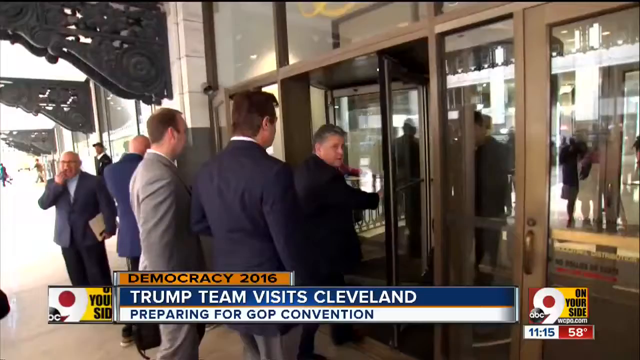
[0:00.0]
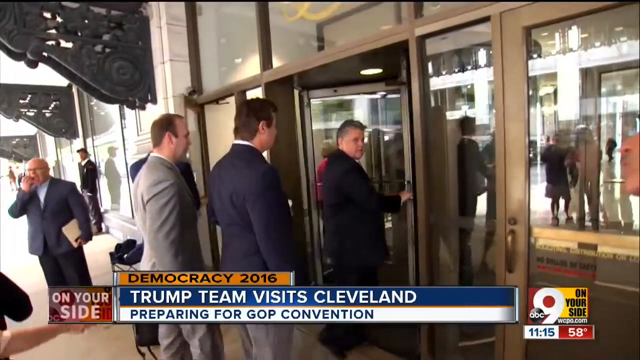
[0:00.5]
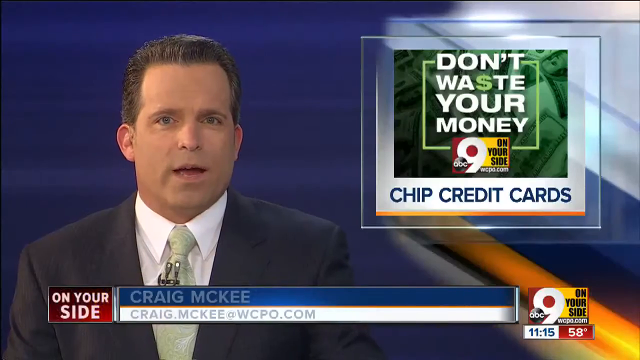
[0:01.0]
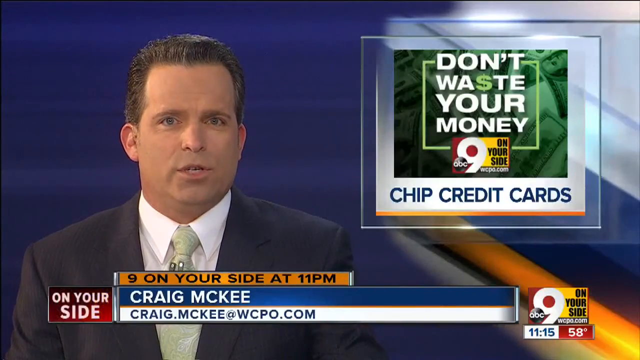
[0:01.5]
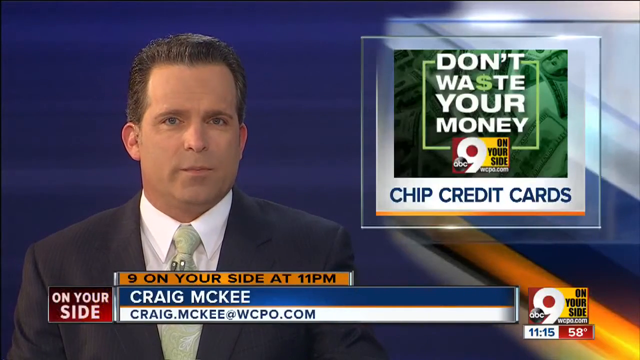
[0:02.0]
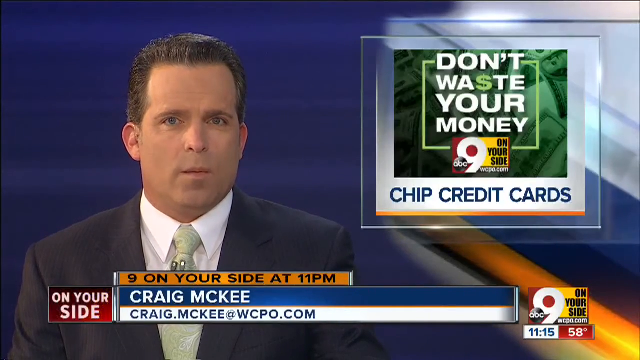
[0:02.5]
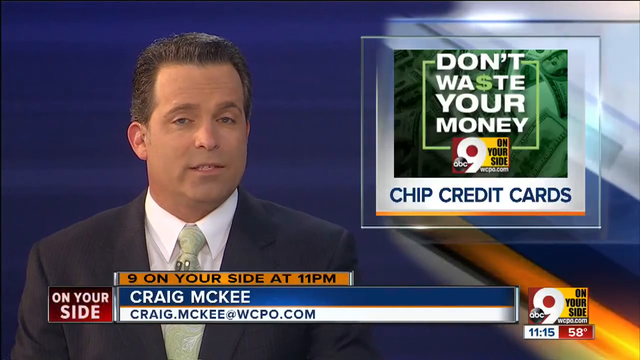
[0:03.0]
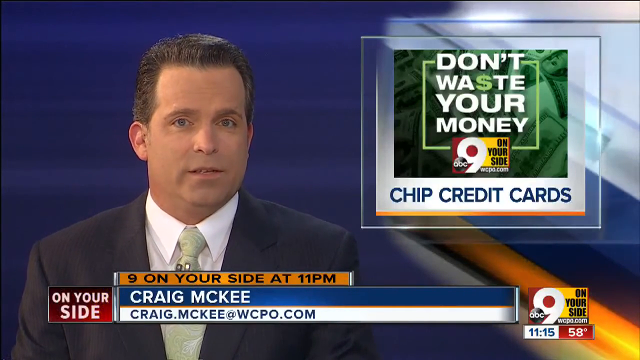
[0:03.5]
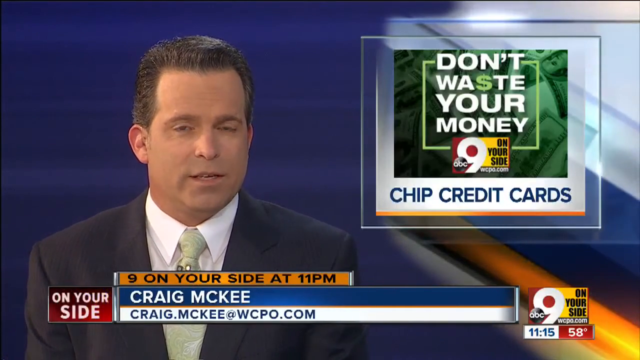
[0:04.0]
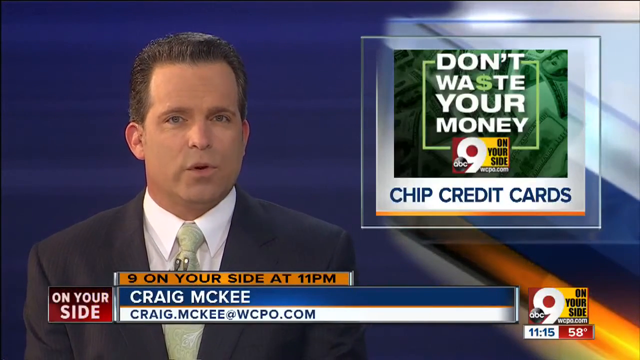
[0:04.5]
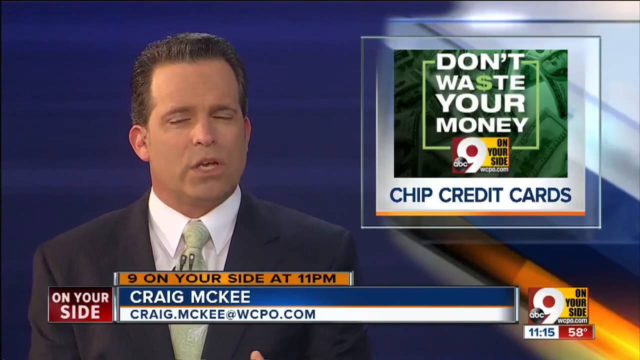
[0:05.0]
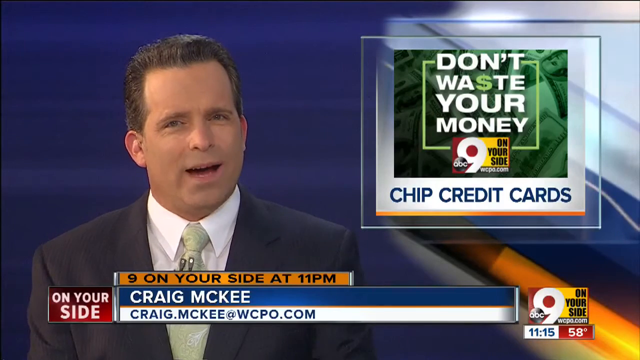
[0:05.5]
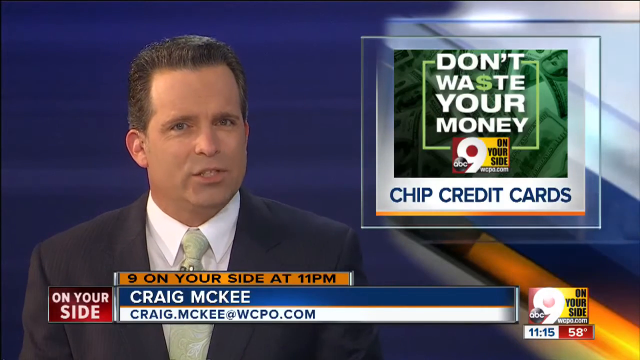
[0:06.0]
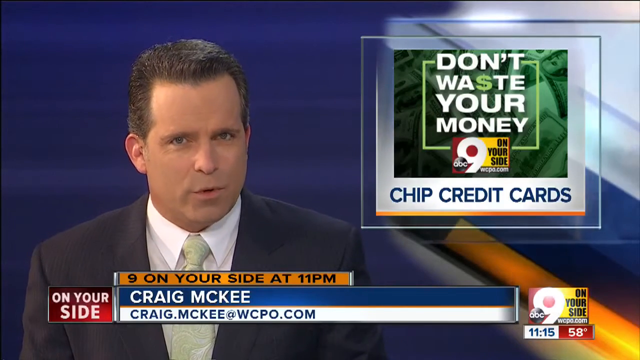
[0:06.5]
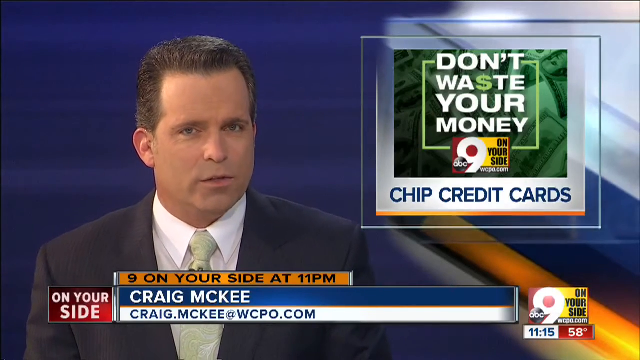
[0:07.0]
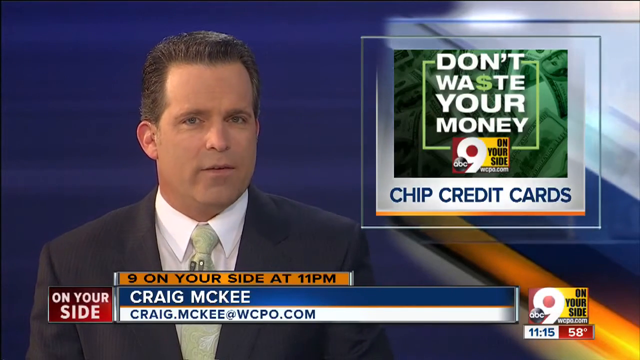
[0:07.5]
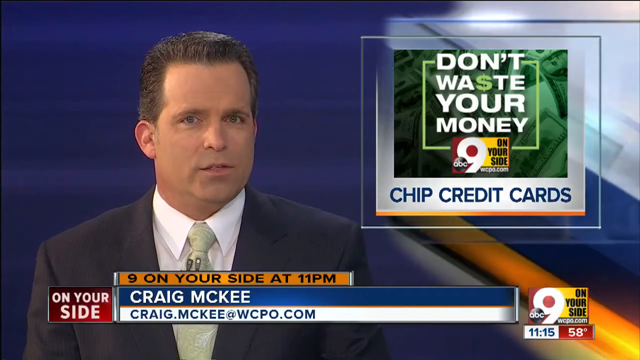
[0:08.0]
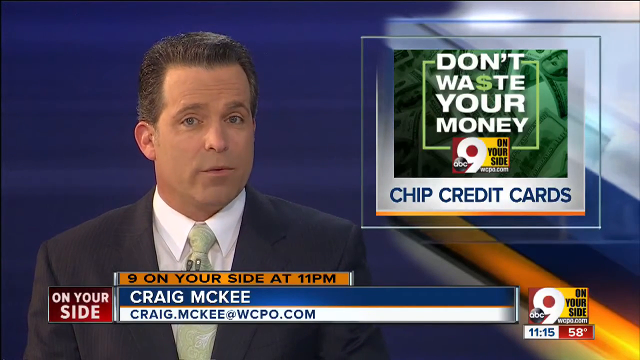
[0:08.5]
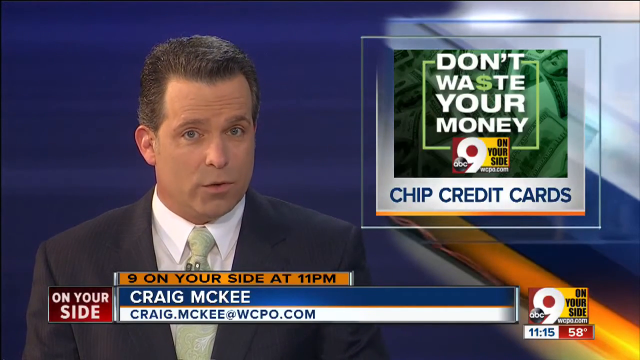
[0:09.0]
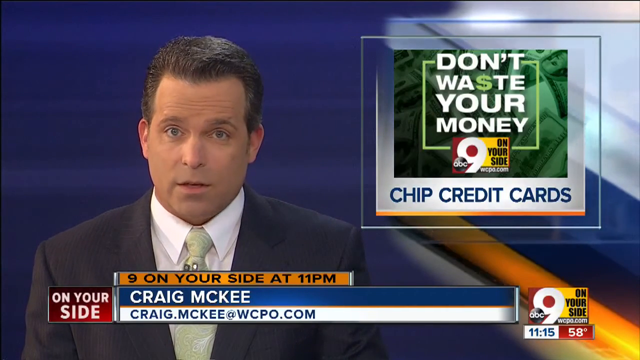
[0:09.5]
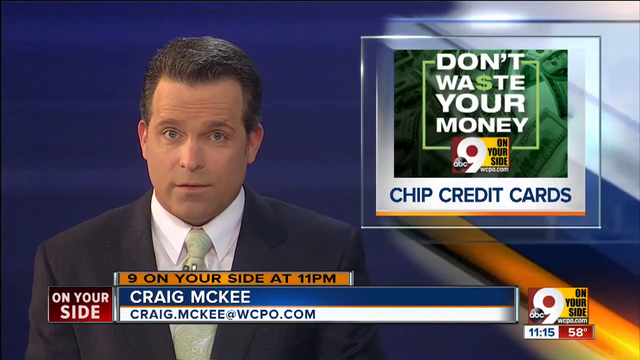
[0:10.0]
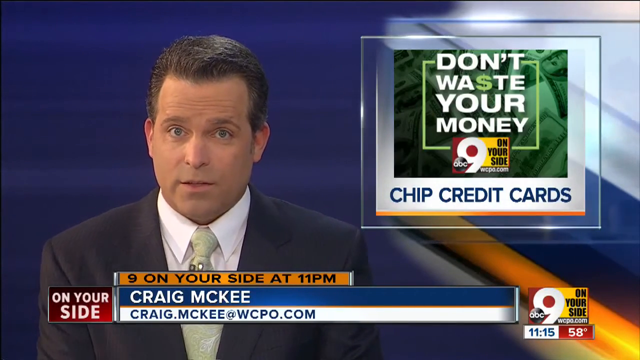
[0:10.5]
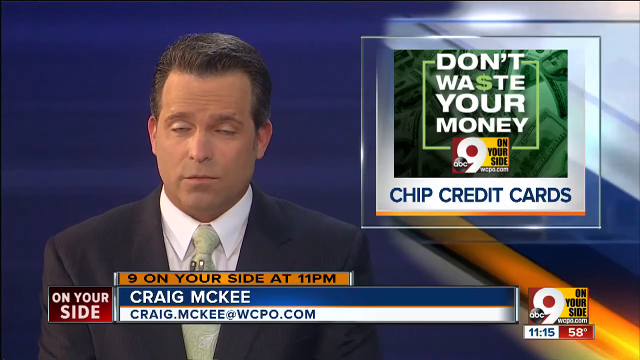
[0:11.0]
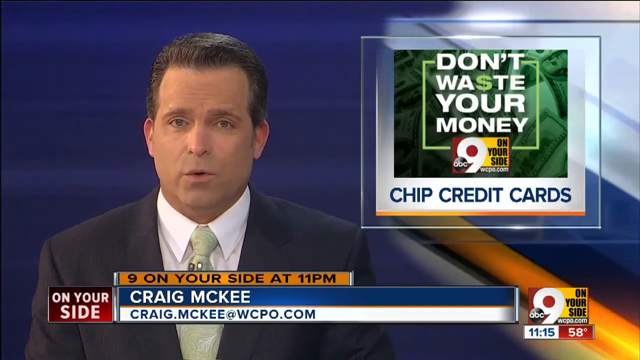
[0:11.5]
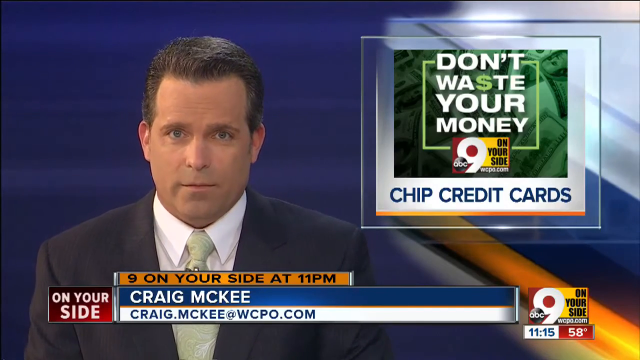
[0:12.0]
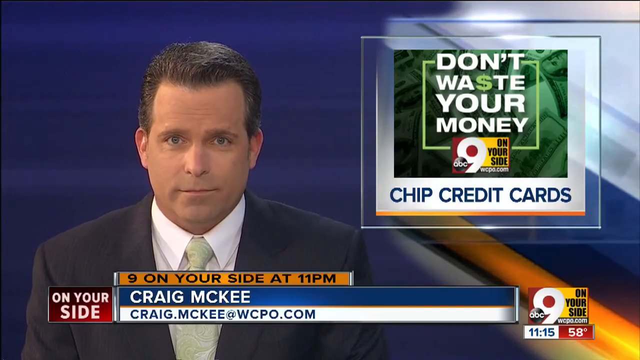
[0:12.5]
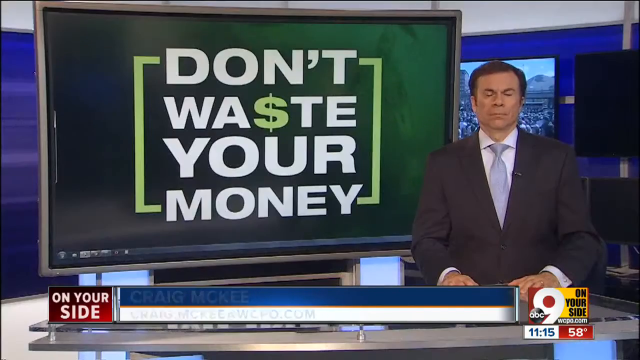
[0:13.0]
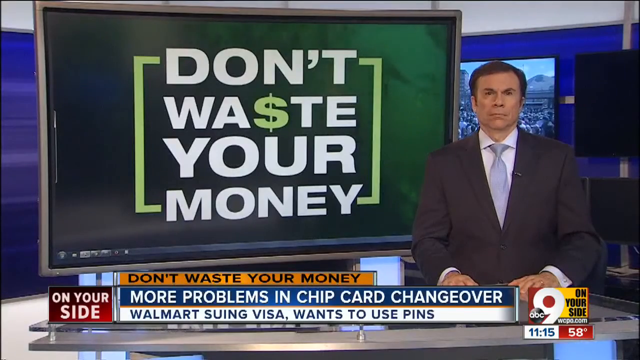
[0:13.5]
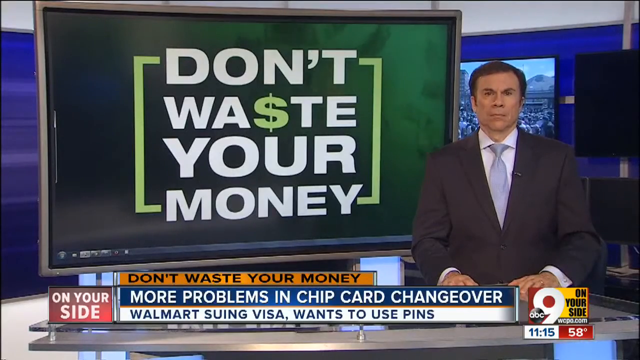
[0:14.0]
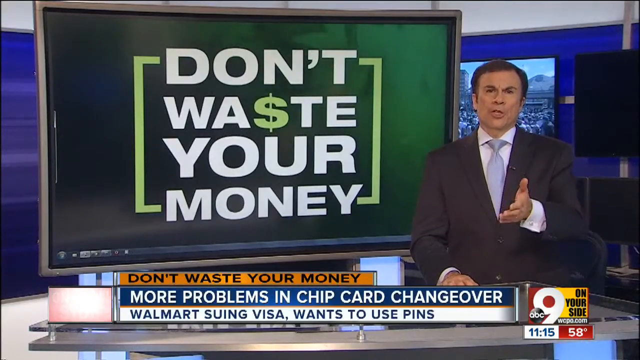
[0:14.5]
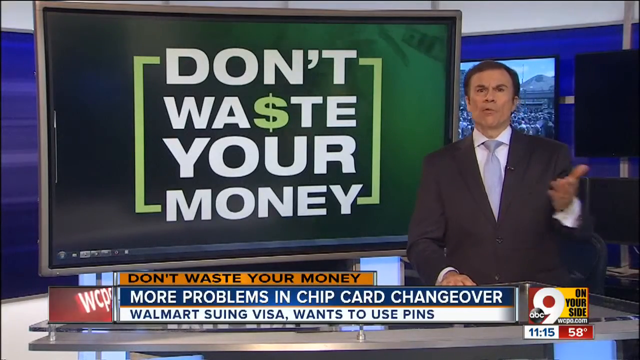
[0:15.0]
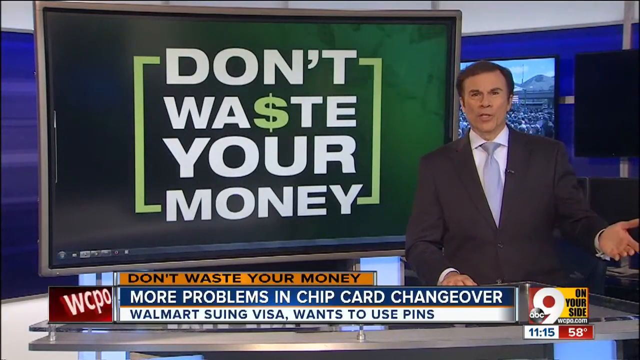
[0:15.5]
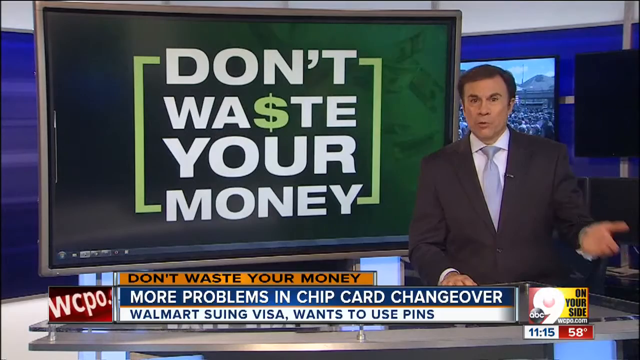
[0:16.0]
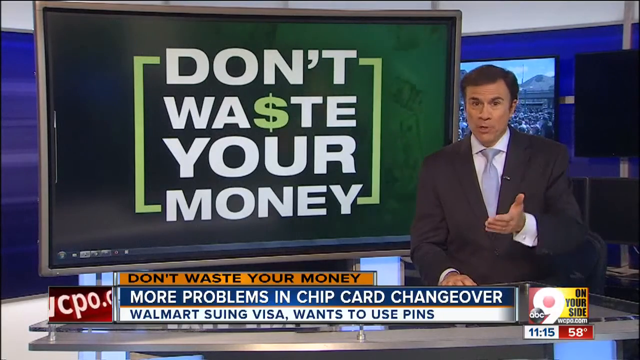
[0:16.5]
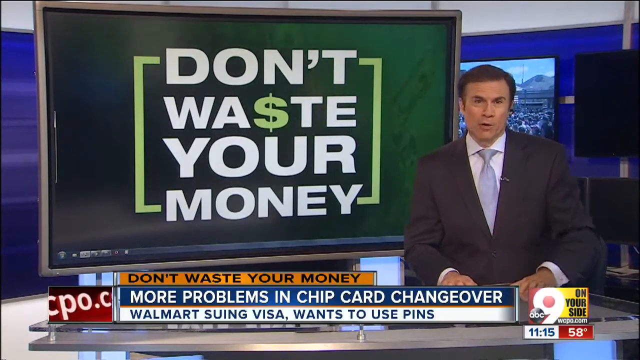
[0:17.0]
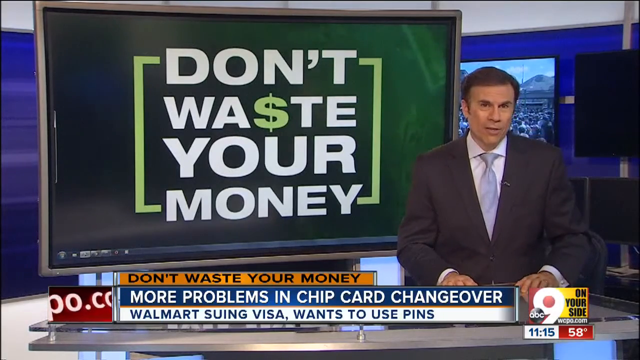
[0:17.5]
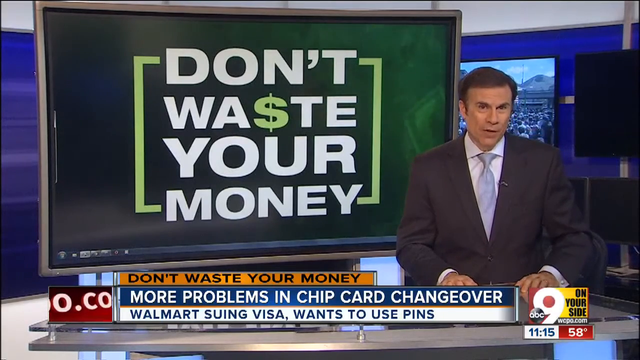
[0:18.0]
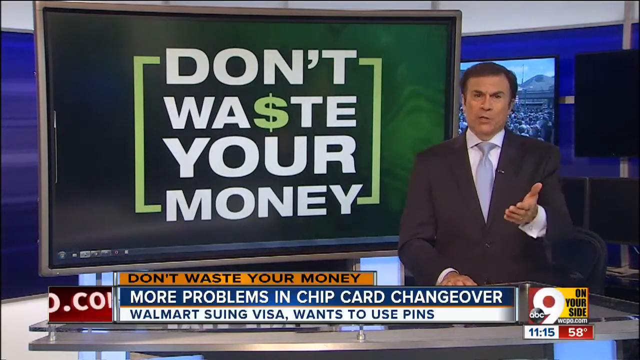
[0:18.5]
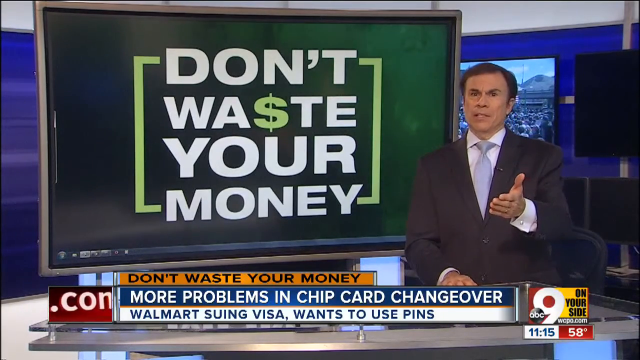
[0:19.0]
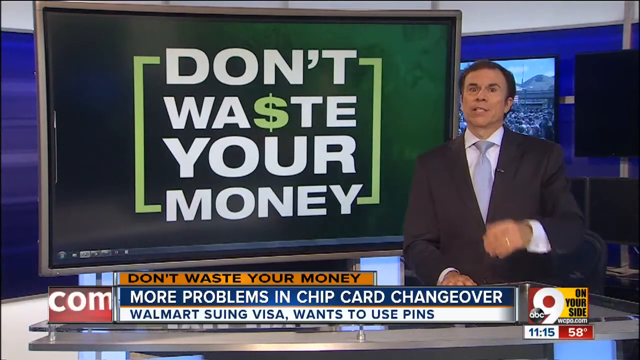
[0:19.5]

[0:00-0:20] A group of men enters what looks to be a team visiting Cleveland. The shot switches to a newscaster in a black suit, a lime green tie and a white shirt. At the top right, text reads "don't waste your money, nine chip credit cards." Along the bottom, text reads "on your side at 11 p.m., Craig McKee, WCPO." He looks at the camera with a relatively pleasant expression. The scene then switches to a different newscaster wearing a light violet tie and a black coat. His left hand is outstretched, thumb out, palm facing the camera. In the middle, dark green with white lettering reads "don't waste your money," with the S in "waste" as a dollar sign. He gestures with his hand back and forth on the desk and up again, and wears a wedding ring on his left ring finger. Right behind his head is a TV screen, not a picture, showing a dark neon-ish blue with a faint image of what looks like a background with people in it, a blue sky, and a mountain range slightly visible in the back. At the bottom, text reads "don't waste your money more problems in chip card change over Walmart swing visa wants to use pins."